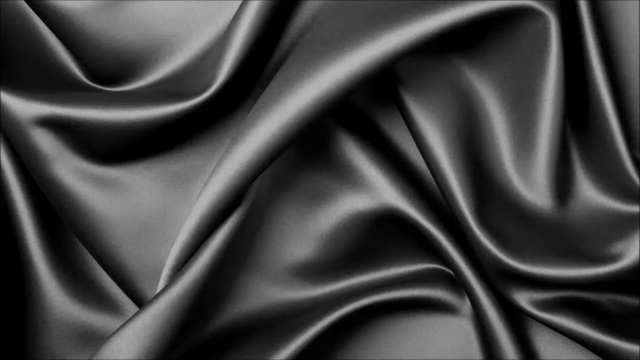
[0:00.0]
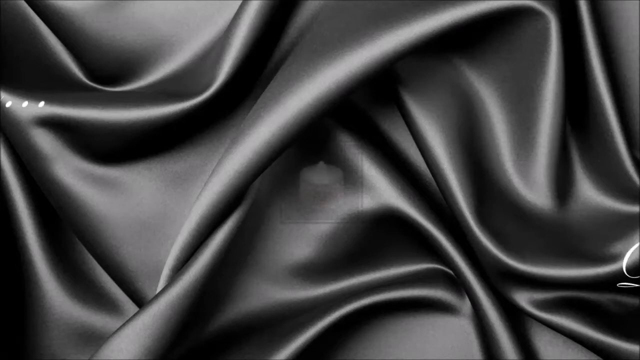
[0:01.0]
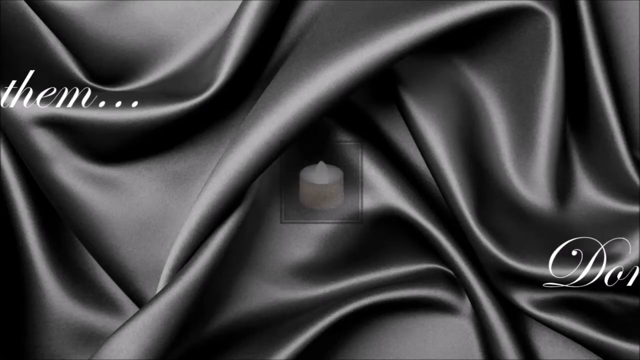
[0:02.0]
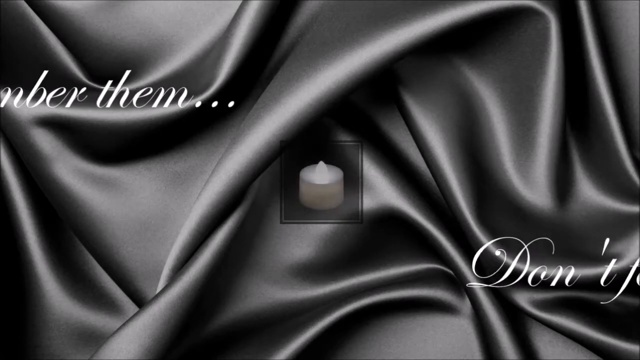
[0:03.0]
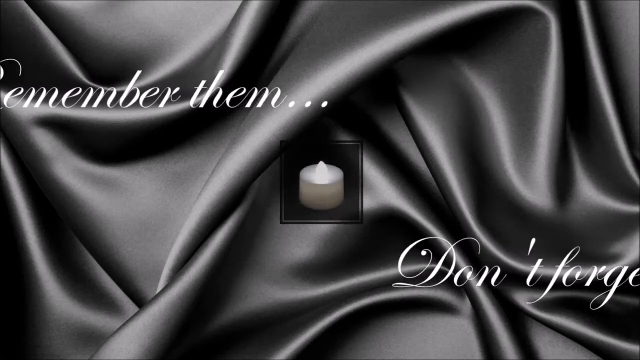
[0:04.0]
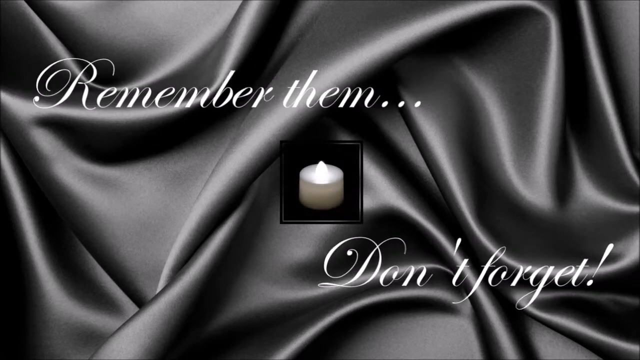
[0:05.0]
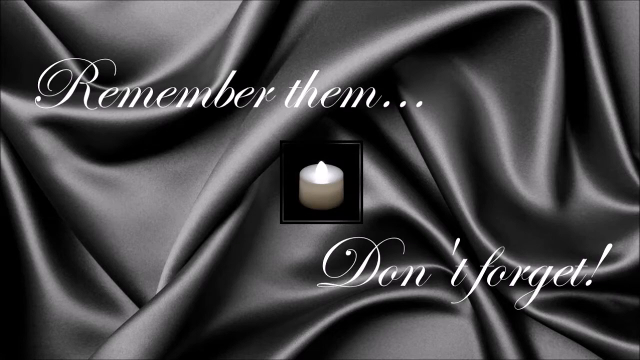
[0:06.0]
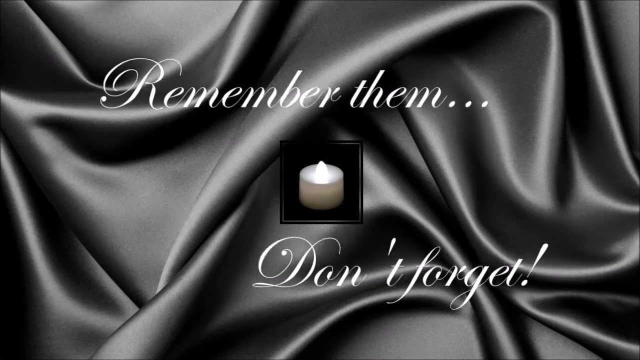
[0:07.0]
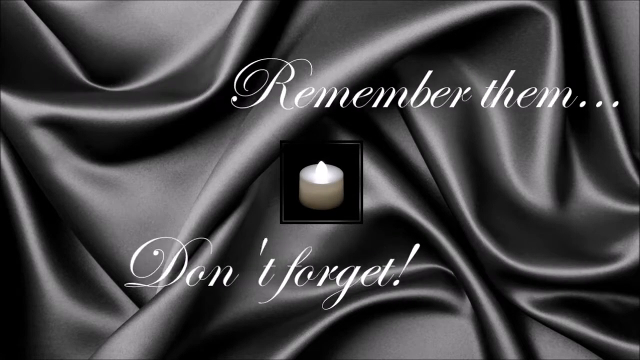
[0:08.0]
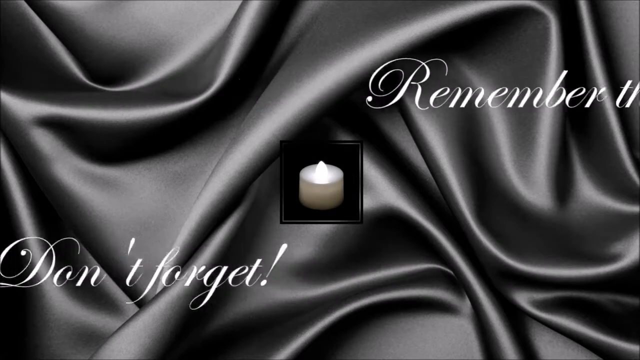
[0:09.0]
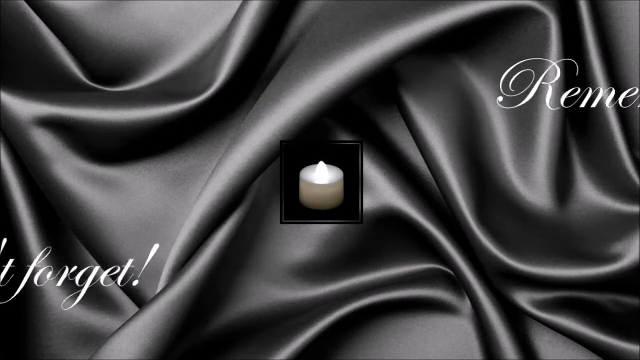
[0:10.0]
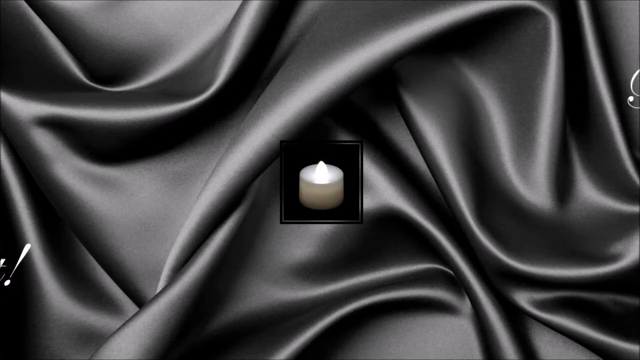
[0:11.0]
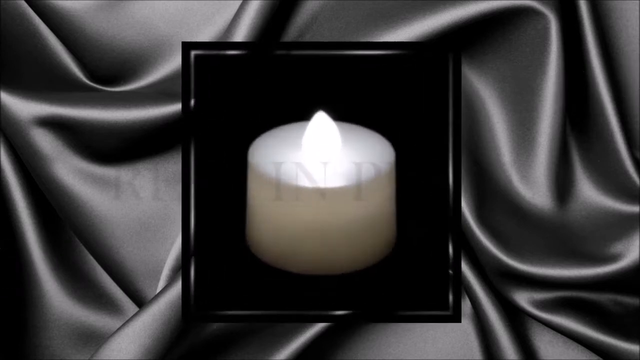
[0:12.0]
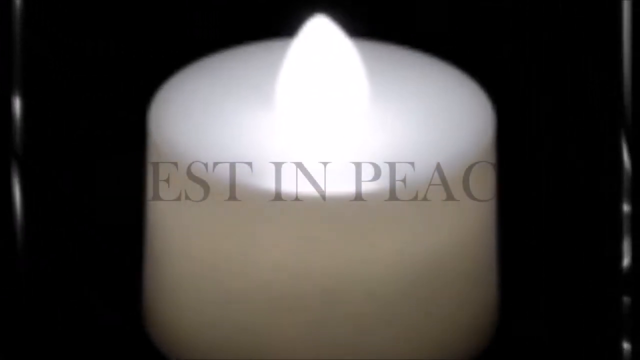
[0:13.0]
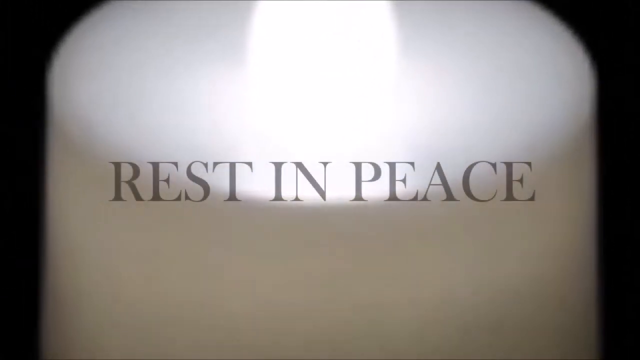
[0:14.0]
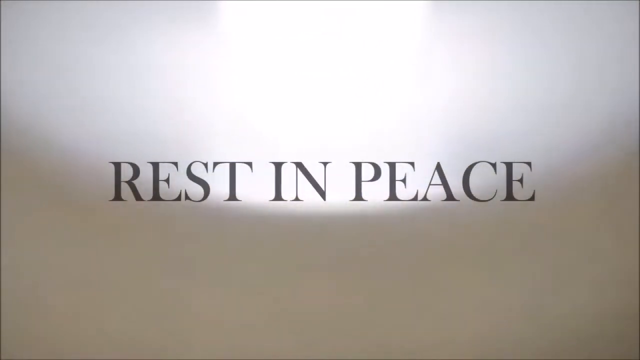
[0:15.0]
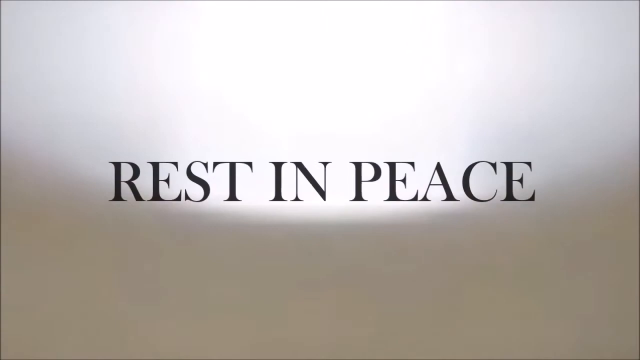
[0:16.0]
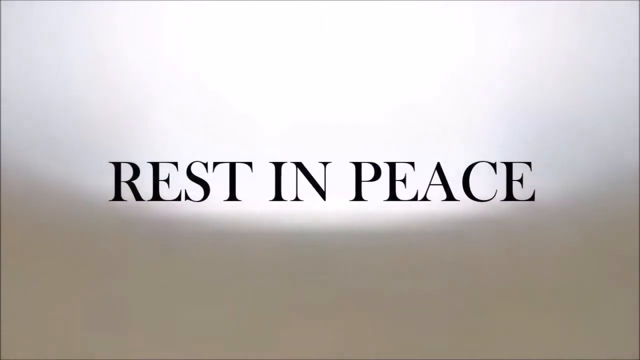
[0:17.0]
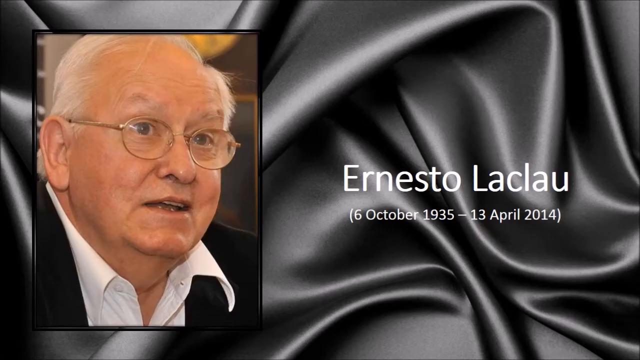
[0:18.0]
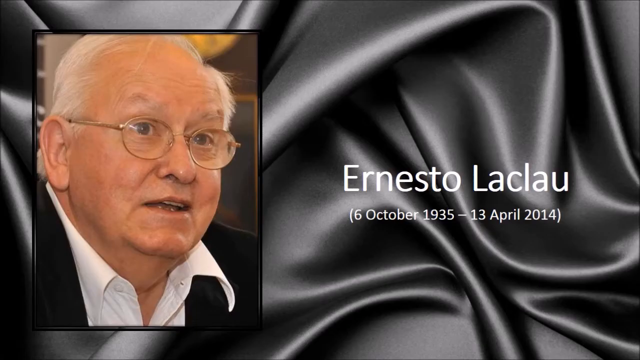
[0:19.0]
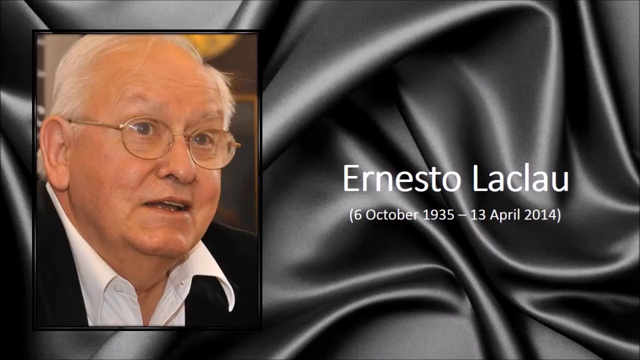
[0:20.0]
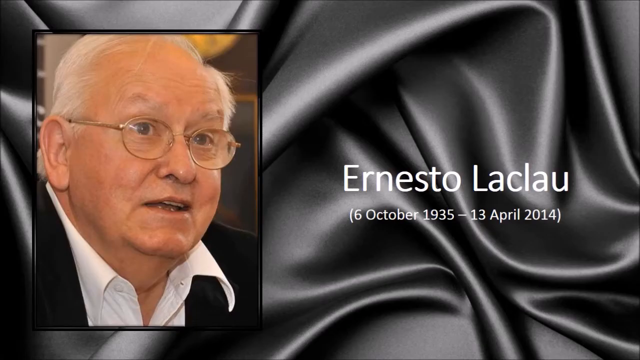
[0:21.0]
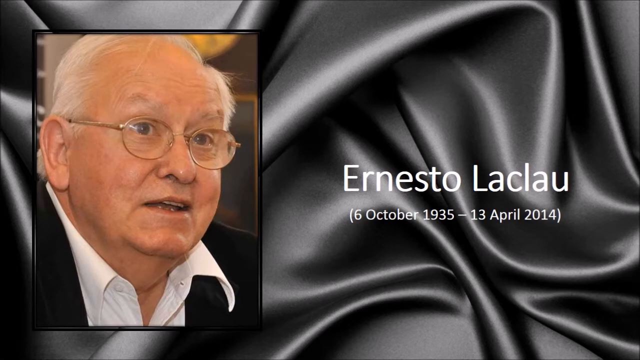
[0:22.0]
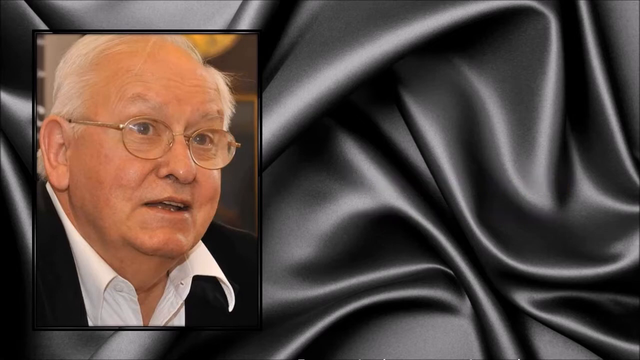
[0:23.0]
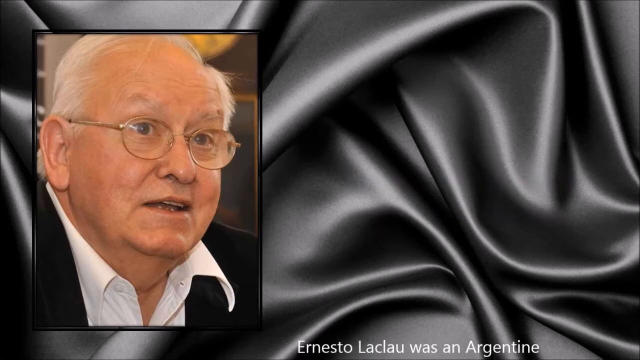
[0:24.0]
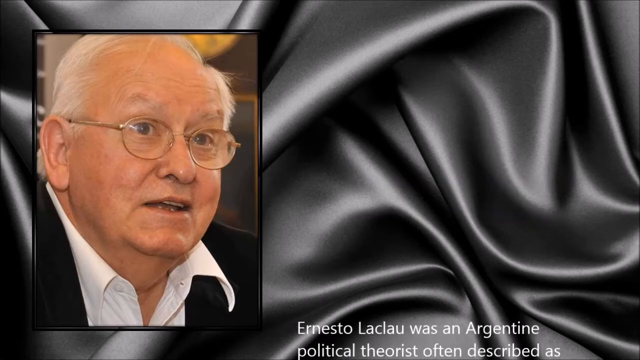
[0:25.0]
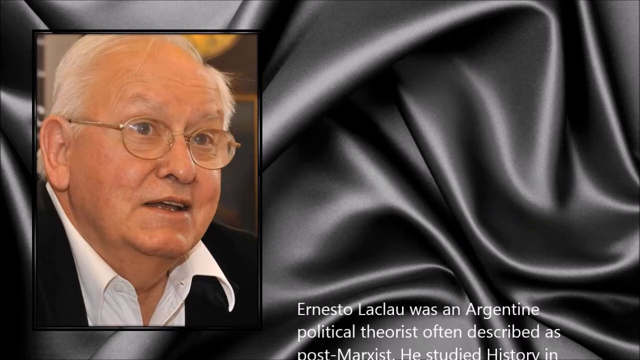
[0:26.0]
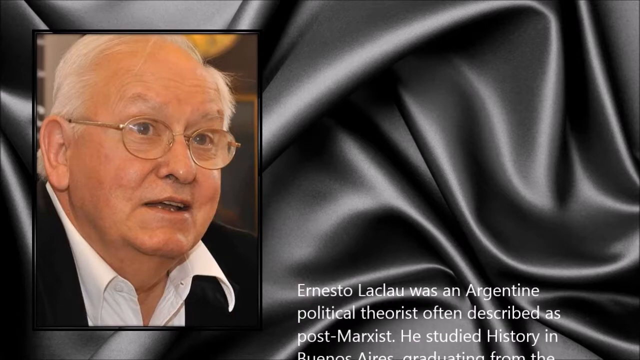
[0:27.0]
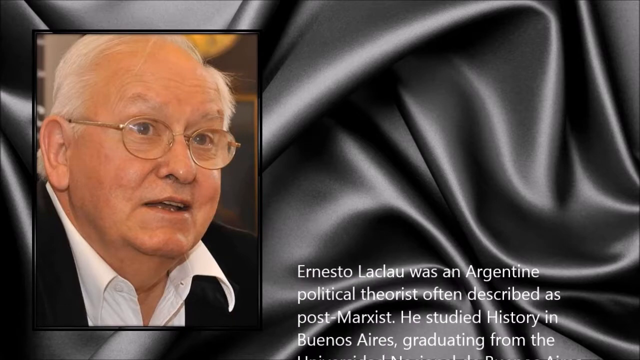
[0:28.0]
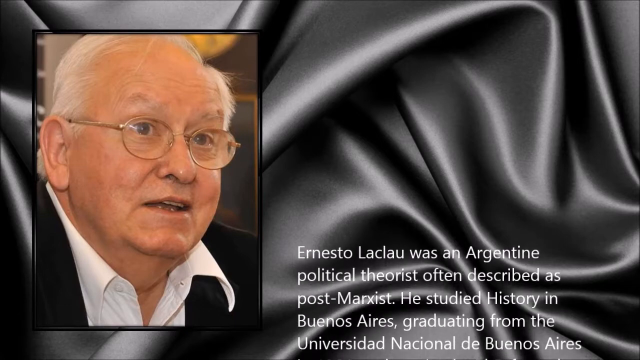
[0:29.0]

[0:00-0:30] A black-grayish curtain fills the background as words come across reading "remember them don't forget" in very fancy script. An illuminated candle, which looks like a flameless candle, is in a square, with the candle focused in the middle and the words "rest in peace" in fancy yet very basic block letters. A picture of a man appears with the name "Ernesto Laclau", along with the dates of his birth and death; he was born October 6, 1935. Text then begins "Ernesto Laclau was" and gives a description of him, a white man and political theorist, but the description cuts off in the middle, so it cannot be fully read. All of this is shown over a grayish-blackish silk satin piece of fabric.